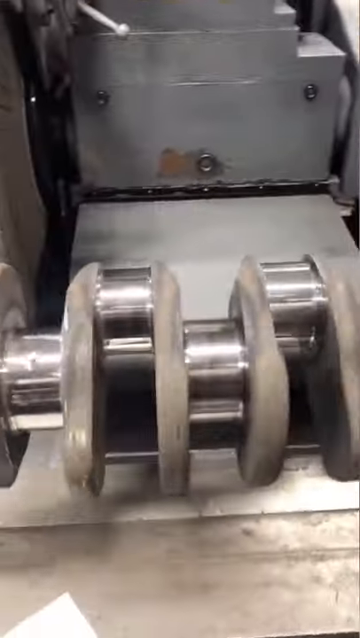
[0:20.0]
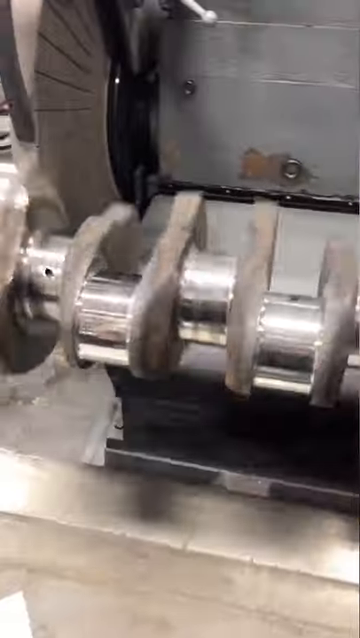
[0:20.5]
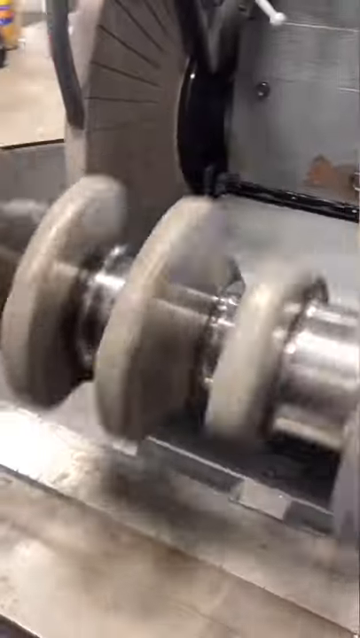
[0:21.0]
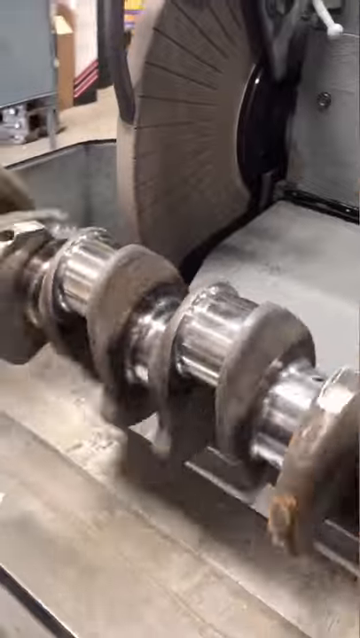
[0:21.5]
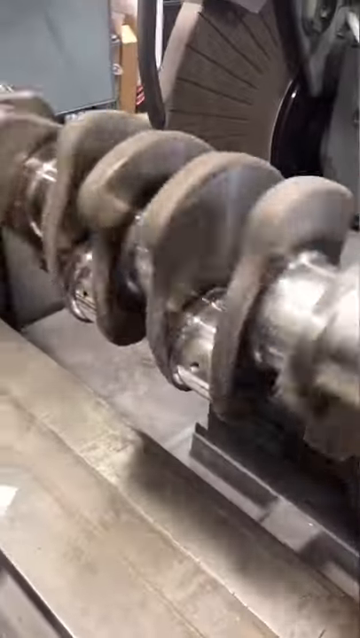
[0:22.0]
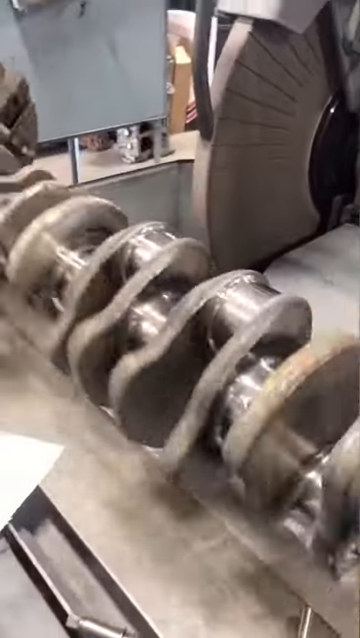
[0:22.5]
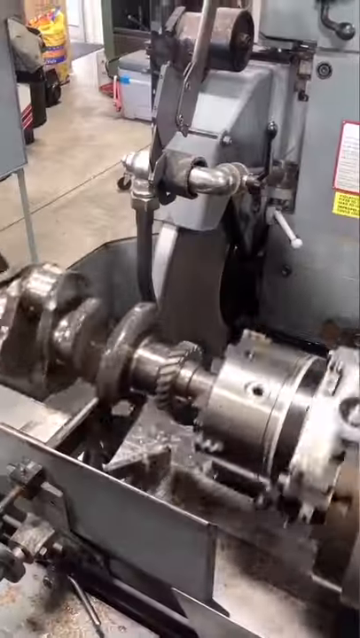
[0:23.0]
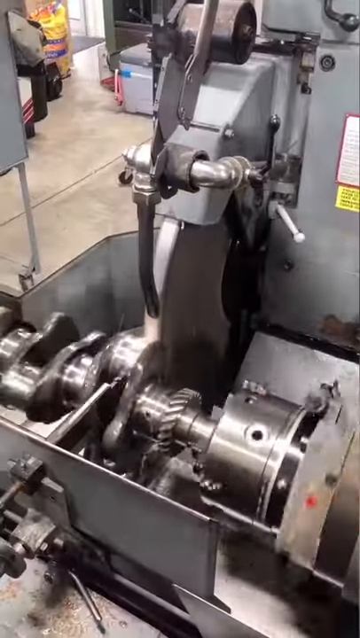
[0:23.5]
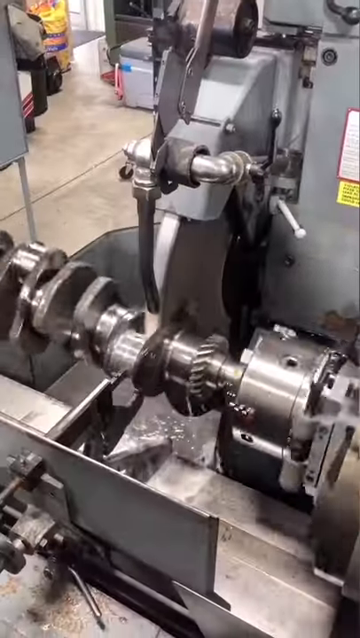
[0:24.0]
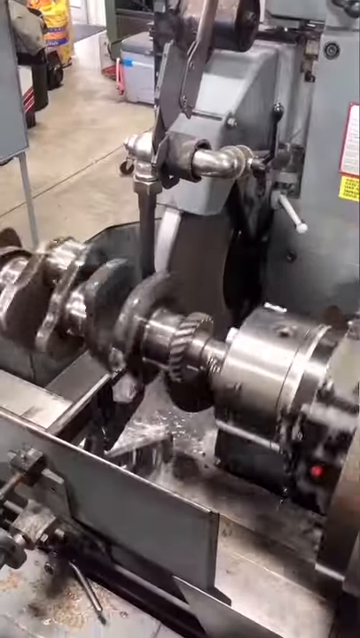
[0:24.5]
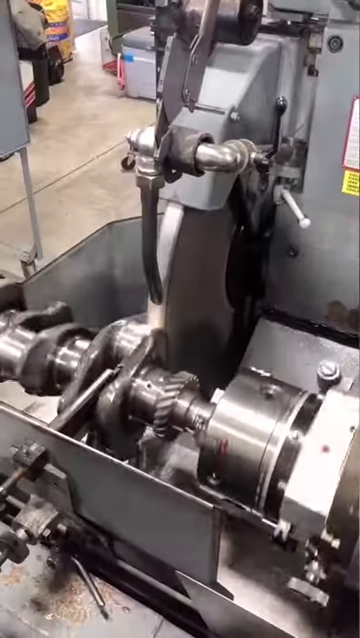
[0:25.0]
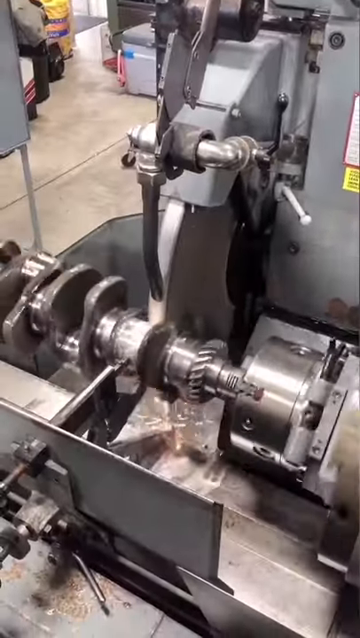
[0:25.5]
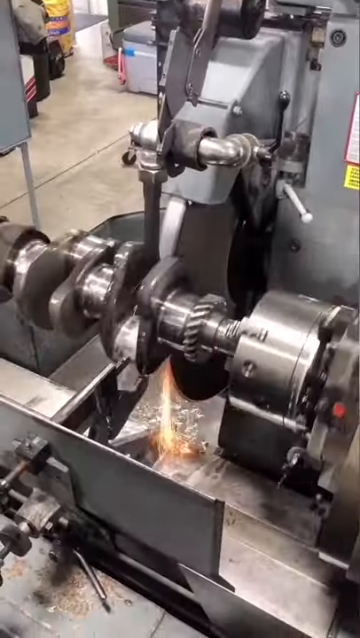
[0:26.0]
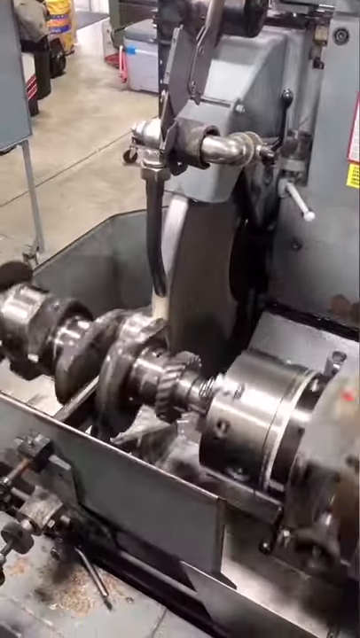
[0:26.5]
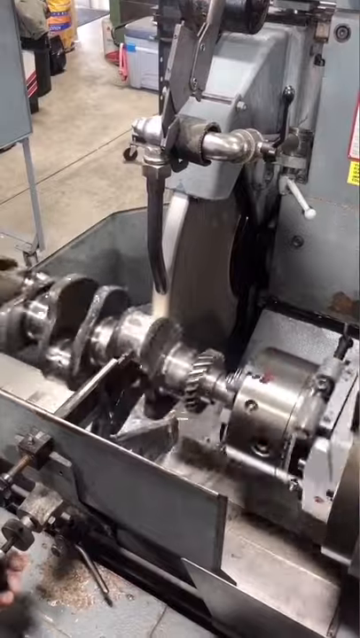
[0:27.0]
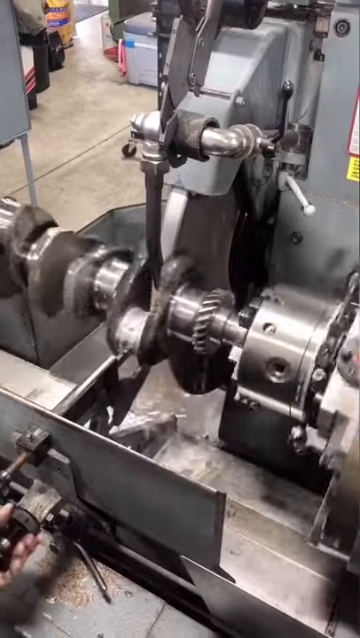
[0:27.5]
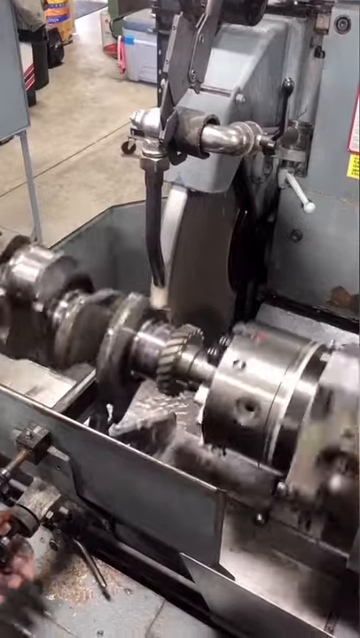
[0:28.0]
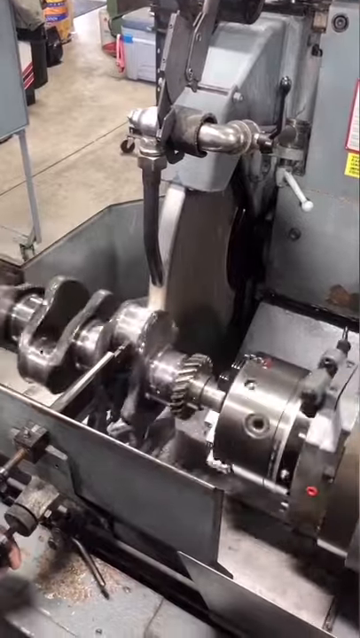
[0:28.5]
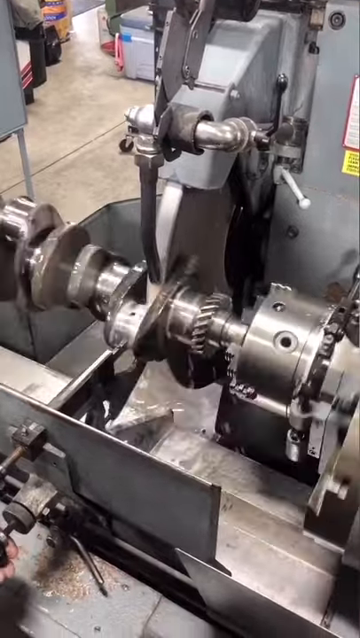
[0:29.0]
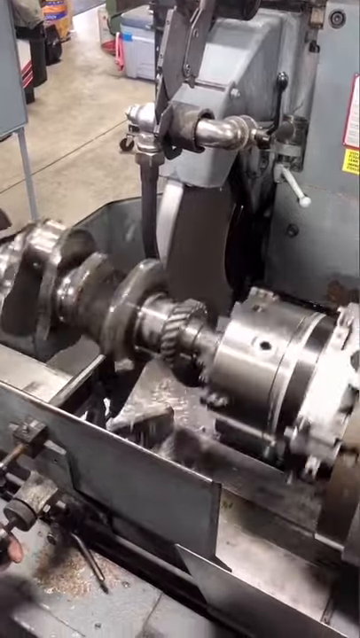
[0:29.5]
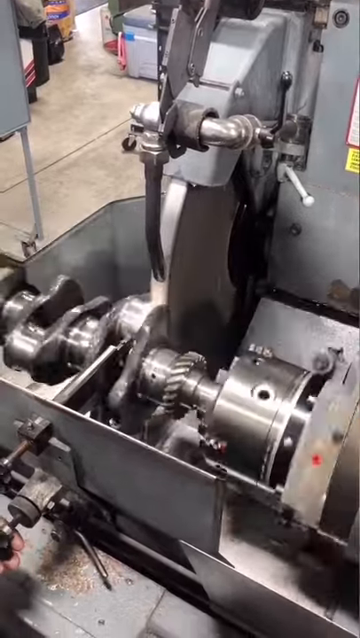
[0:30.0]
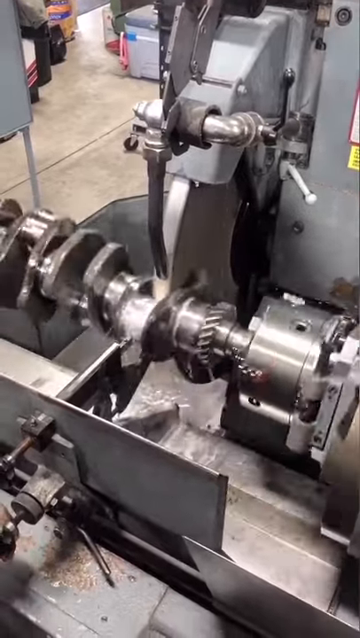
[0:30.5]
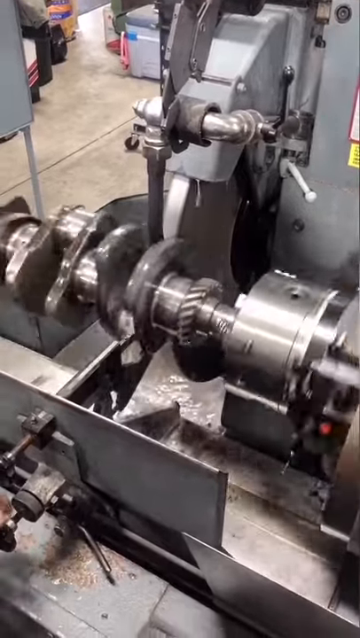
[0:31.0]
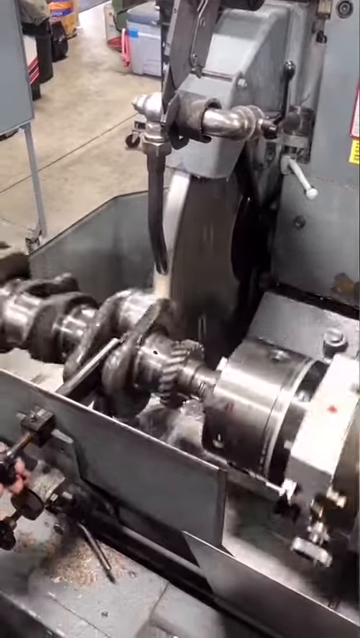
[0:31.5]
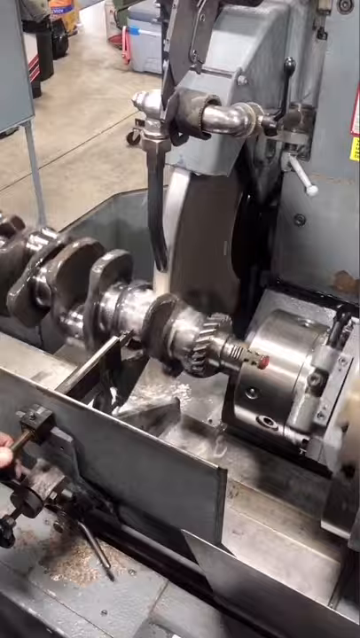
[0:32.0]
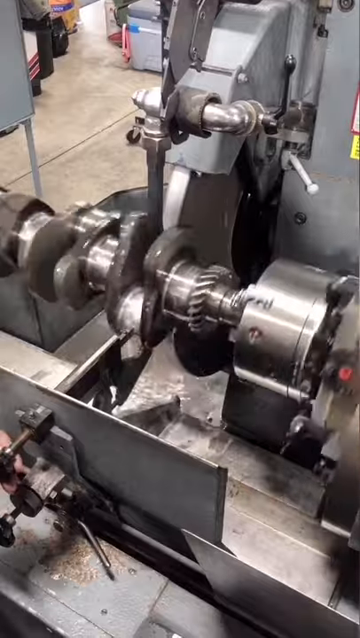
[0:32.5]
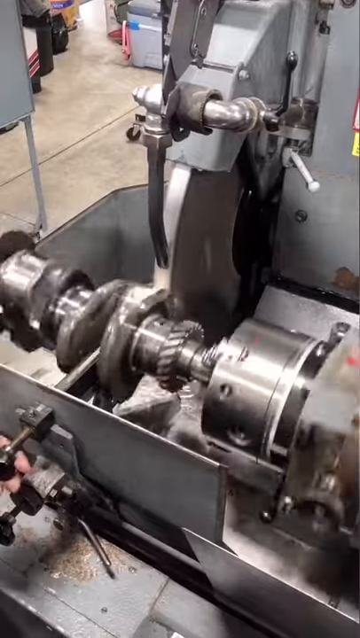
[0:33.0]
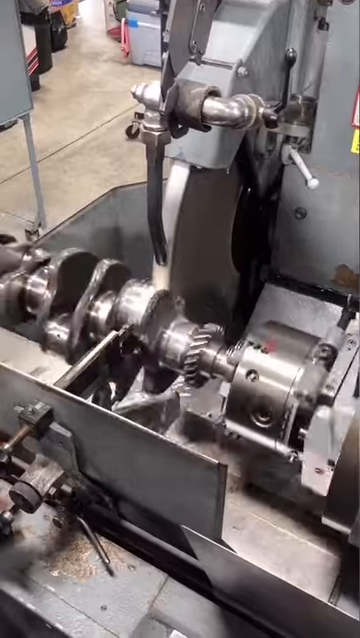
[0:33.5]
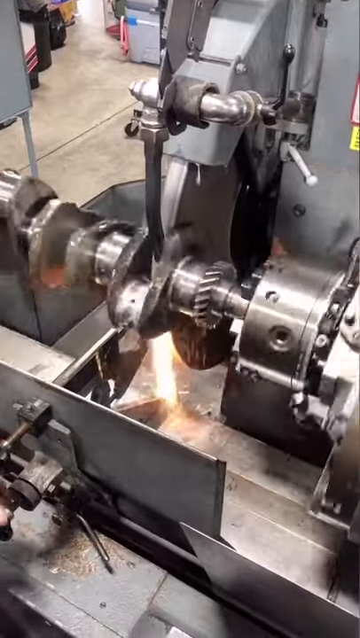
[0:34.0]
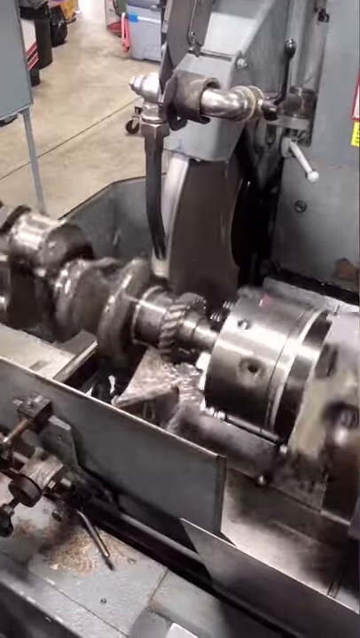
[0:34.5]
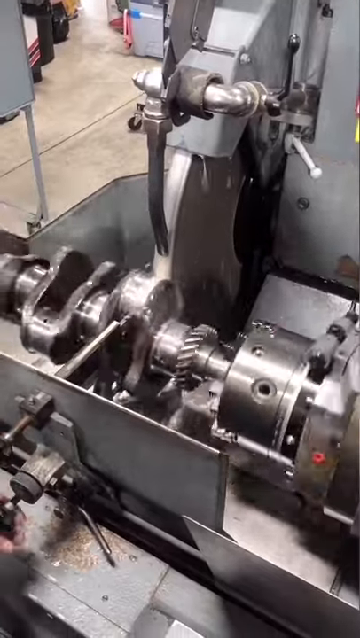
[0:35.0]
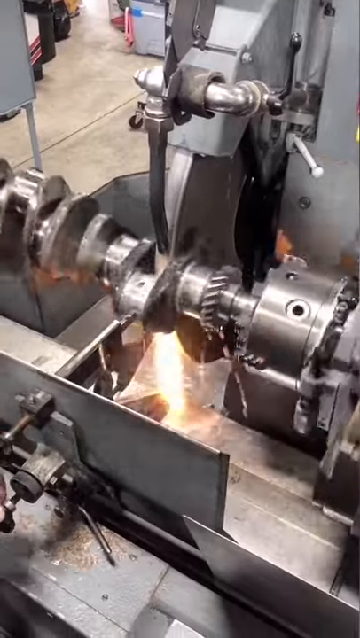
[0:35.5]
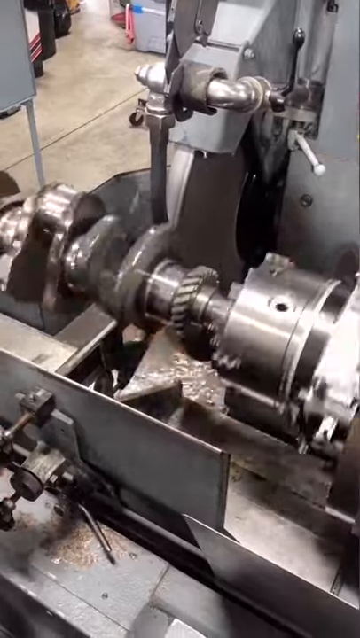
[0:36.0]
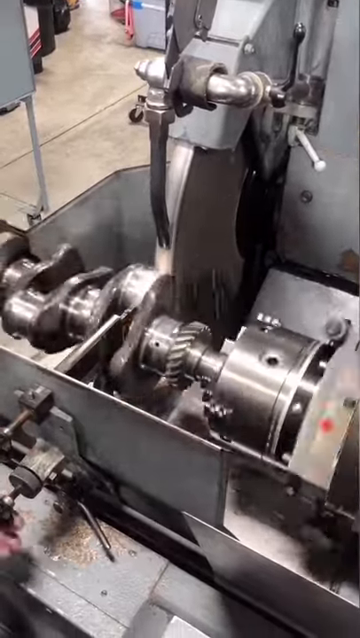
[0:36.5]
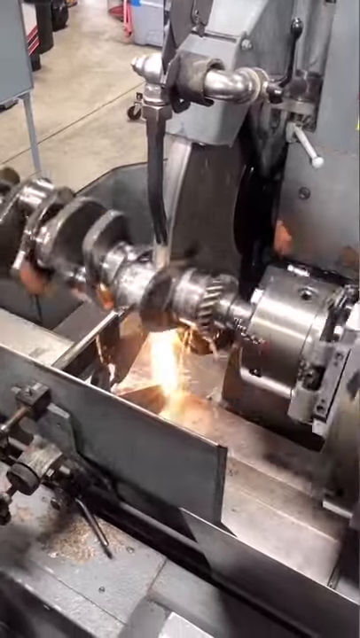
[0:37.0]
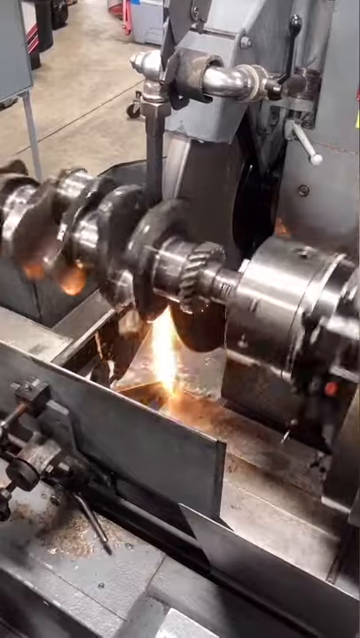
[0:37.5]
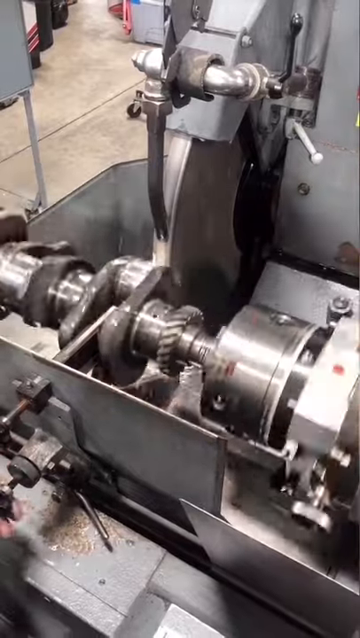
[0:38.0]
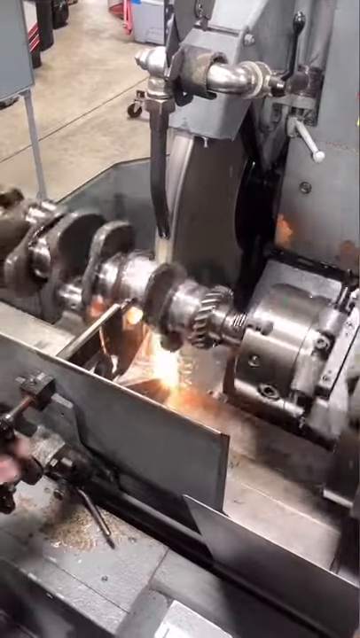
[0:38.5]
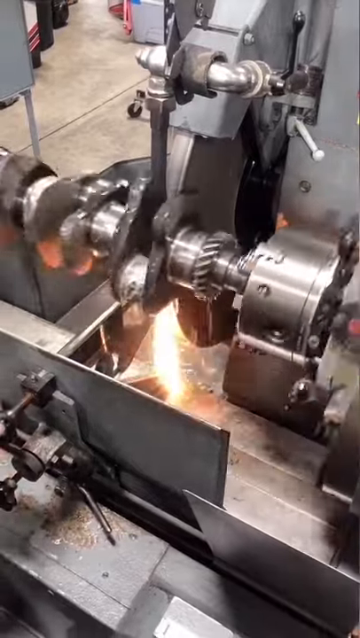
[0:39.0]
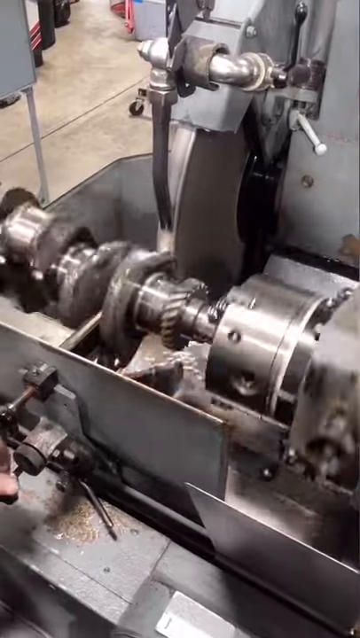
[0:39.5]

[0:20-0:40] A crankshaft, a big piece of machinery, appears to be running, going around and around. Someone's hand manipulates the controls on the outside of it, and more shots show it going around and around. On the machine there is a sticker with some writing on it; one is white and red, and another appears to be yellow. The machine is mostly metal and has a tube with water running through it. The floor surrounding it appears to be concrete, and things are visible in the background. Water drips off the machine, and there also appears to be some fire coming out of it. It appears to be running as it's supposed to.